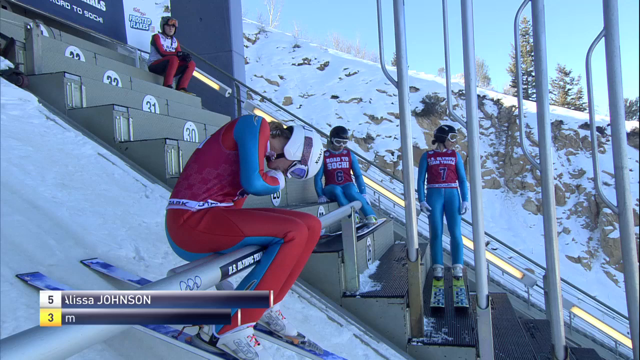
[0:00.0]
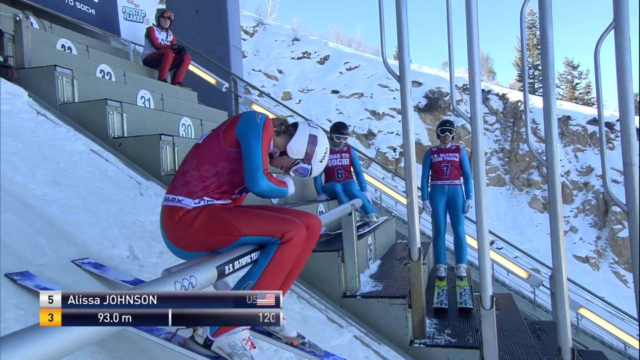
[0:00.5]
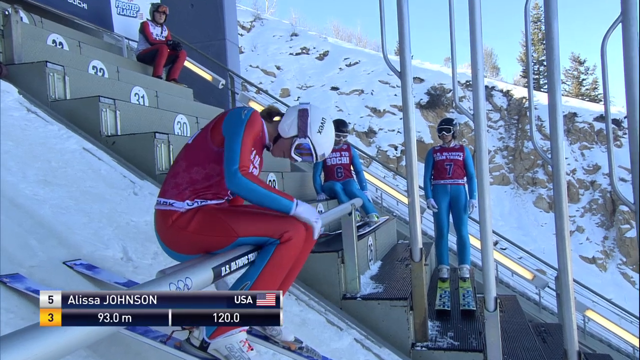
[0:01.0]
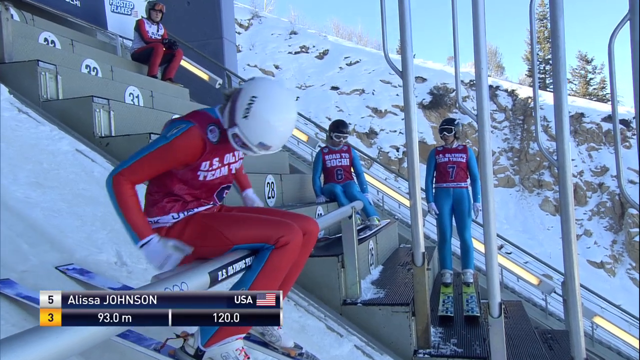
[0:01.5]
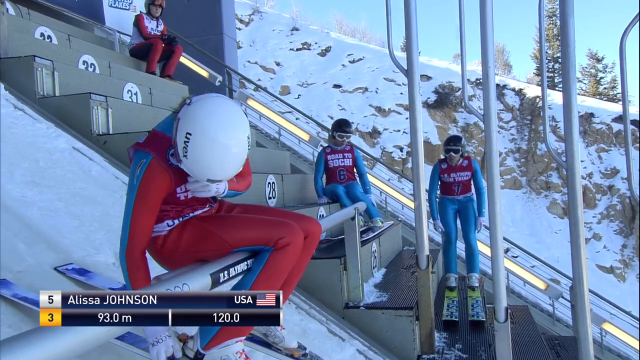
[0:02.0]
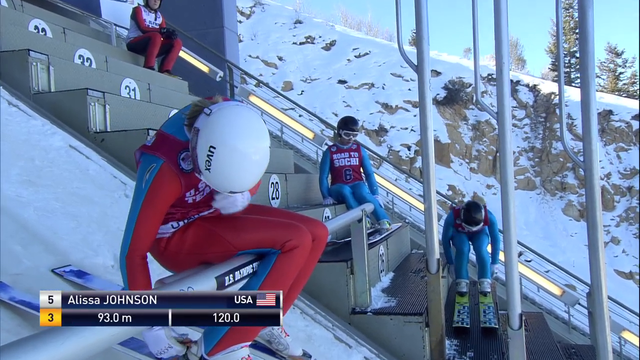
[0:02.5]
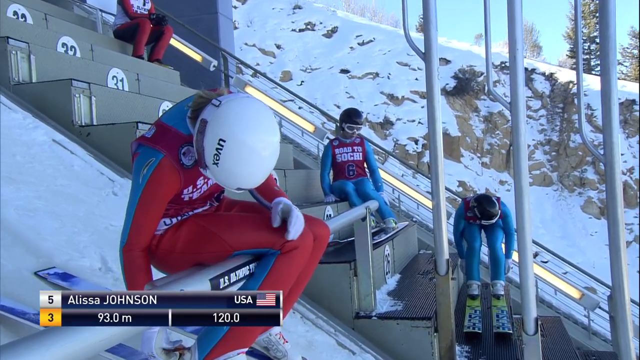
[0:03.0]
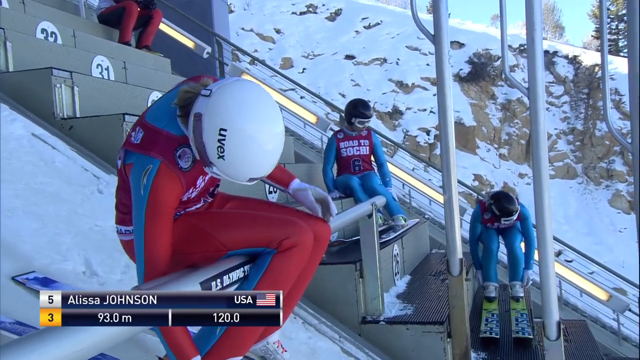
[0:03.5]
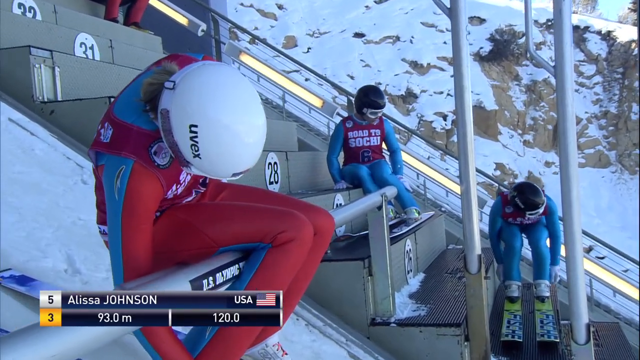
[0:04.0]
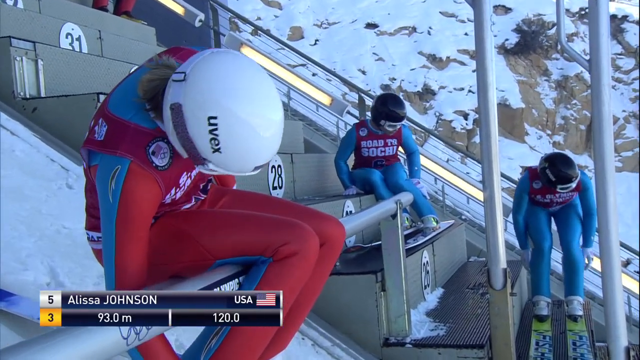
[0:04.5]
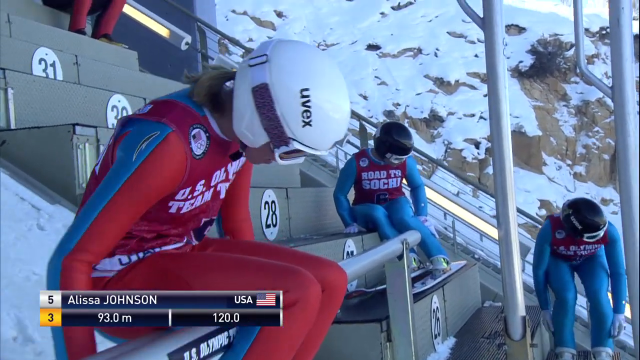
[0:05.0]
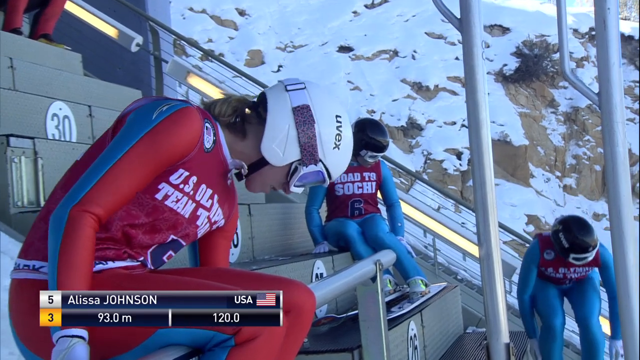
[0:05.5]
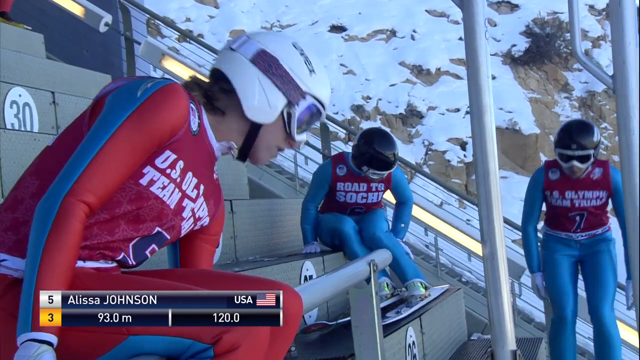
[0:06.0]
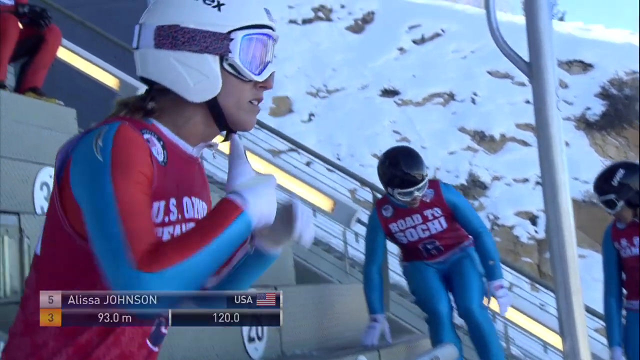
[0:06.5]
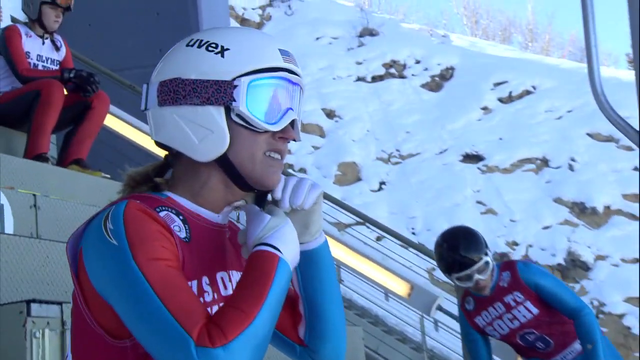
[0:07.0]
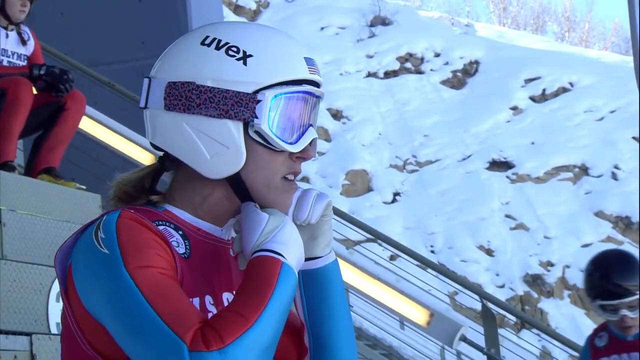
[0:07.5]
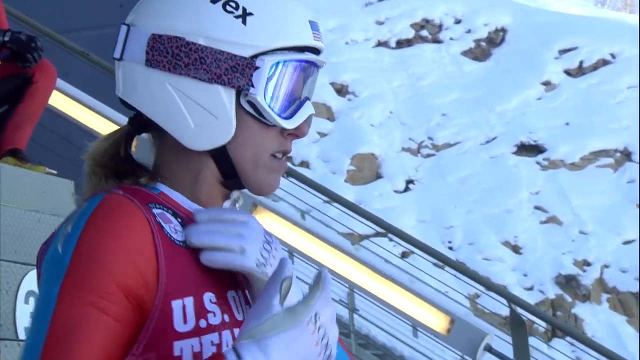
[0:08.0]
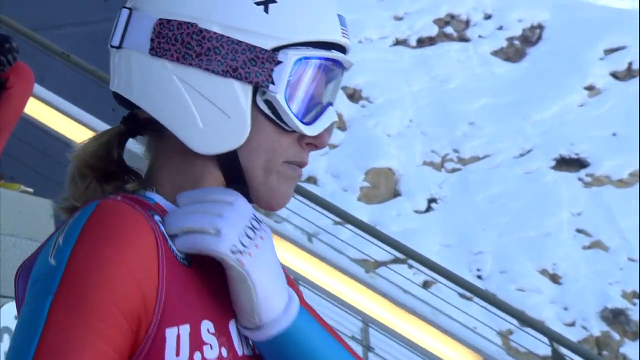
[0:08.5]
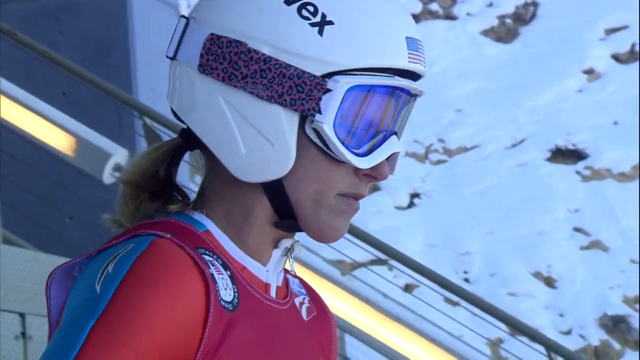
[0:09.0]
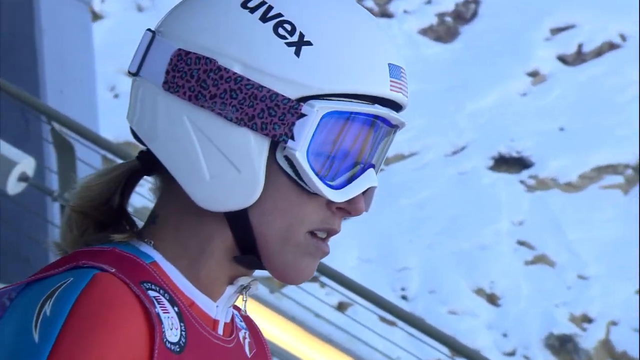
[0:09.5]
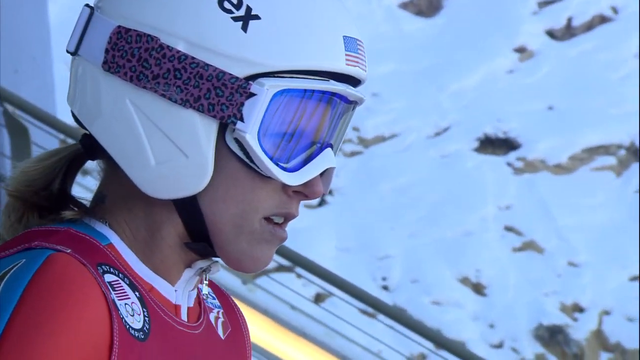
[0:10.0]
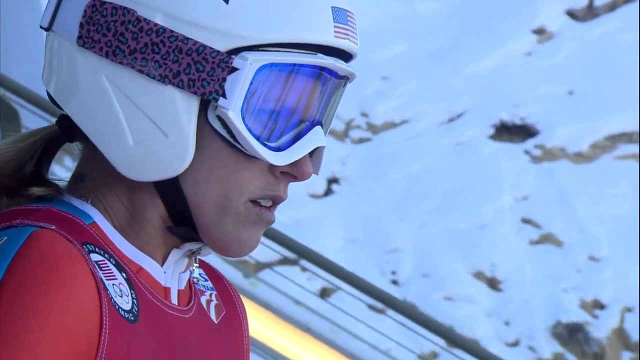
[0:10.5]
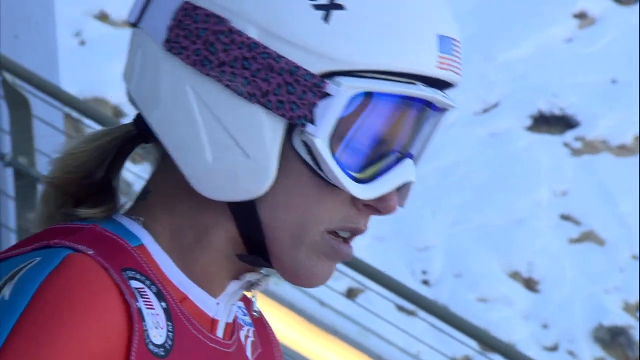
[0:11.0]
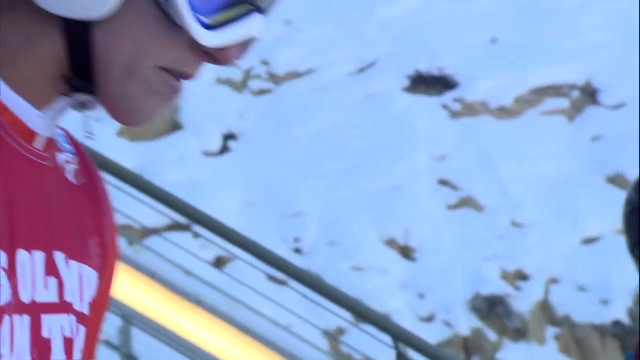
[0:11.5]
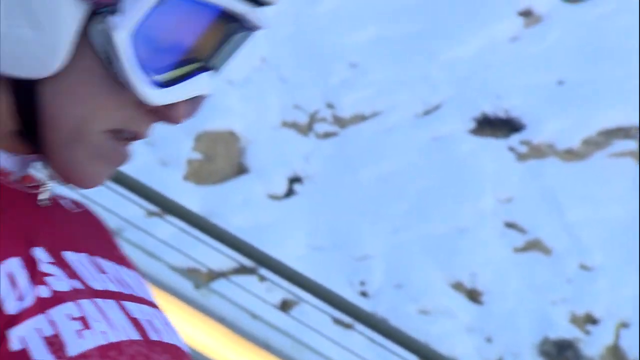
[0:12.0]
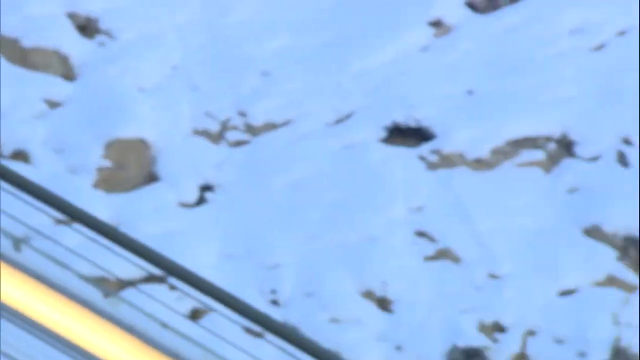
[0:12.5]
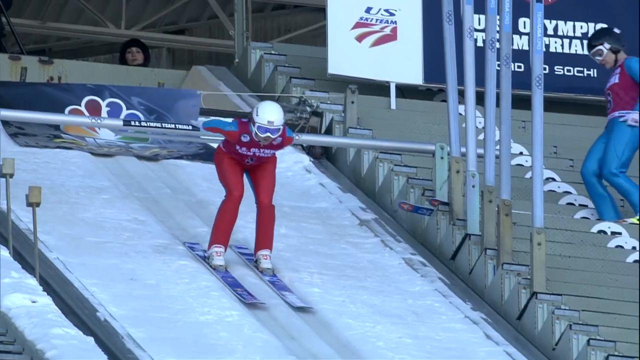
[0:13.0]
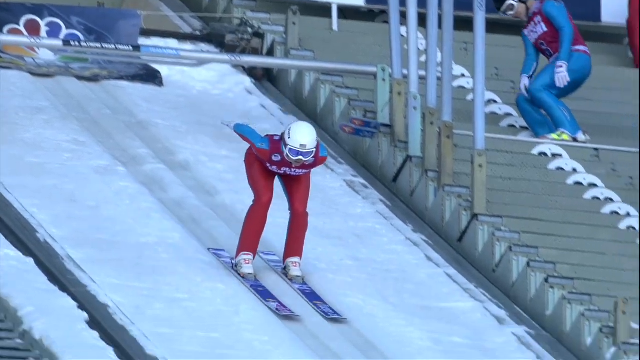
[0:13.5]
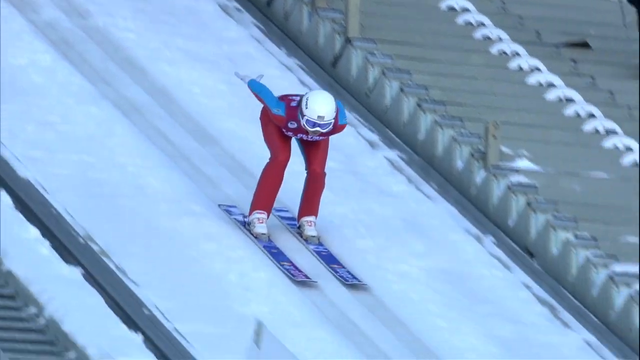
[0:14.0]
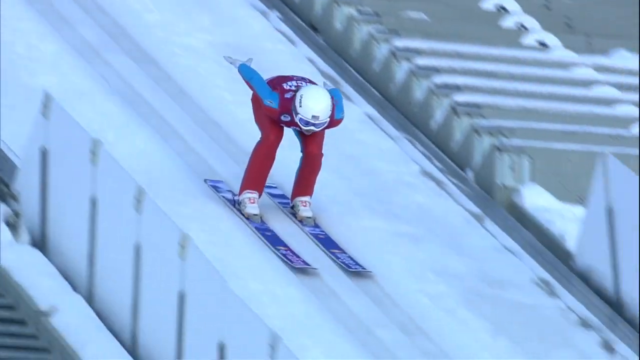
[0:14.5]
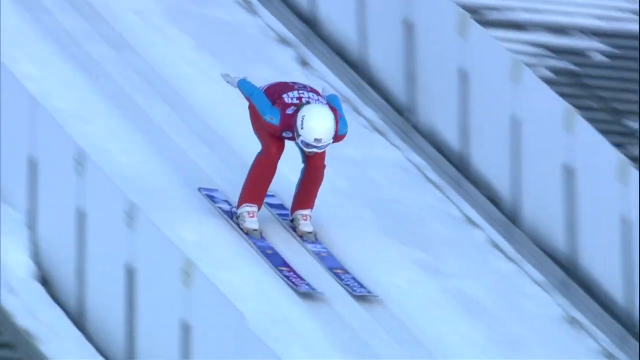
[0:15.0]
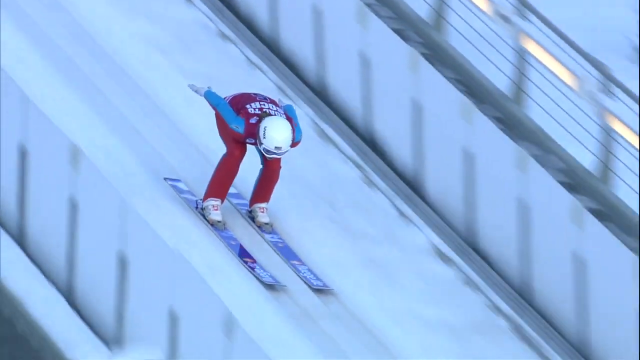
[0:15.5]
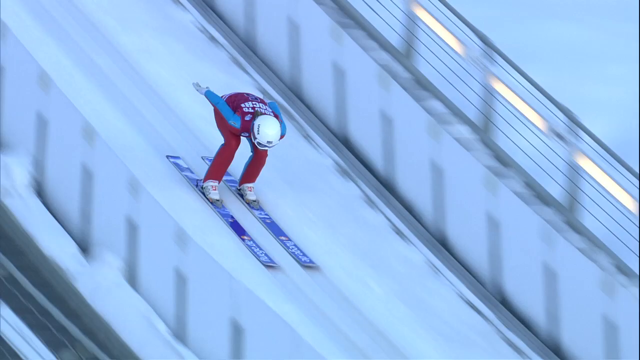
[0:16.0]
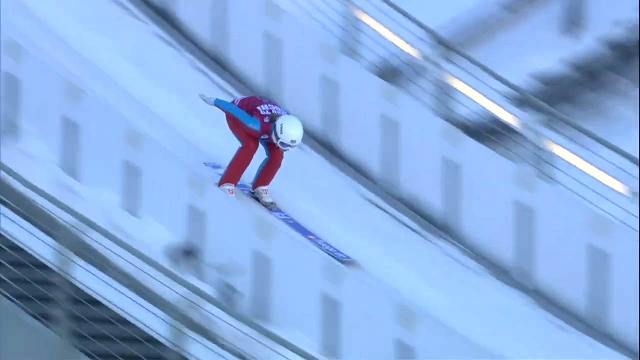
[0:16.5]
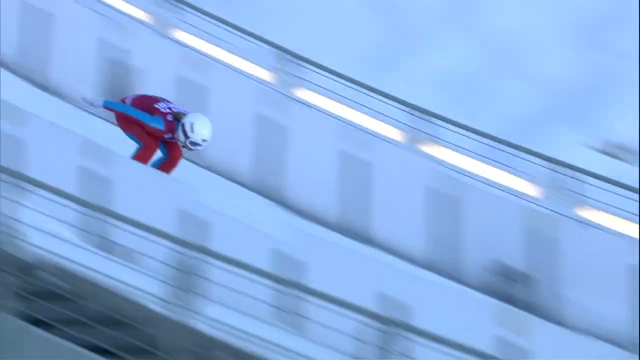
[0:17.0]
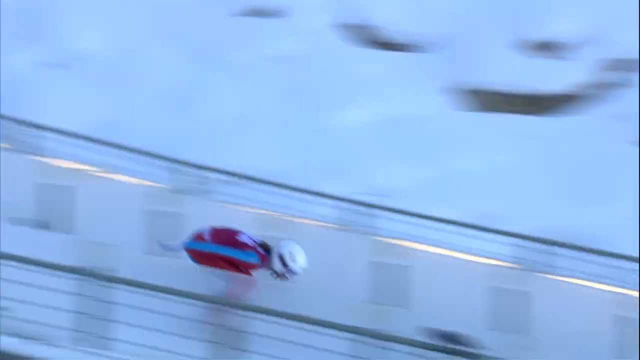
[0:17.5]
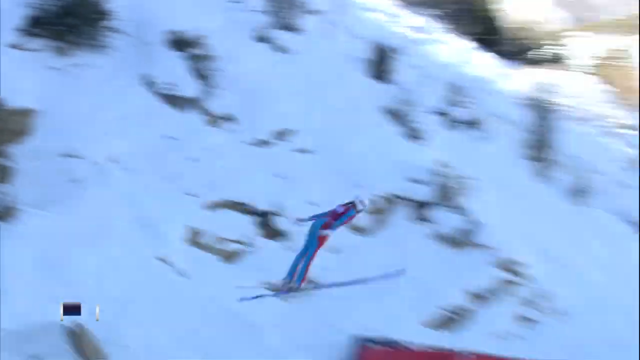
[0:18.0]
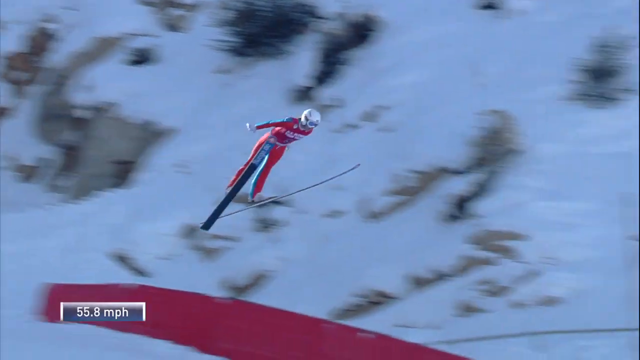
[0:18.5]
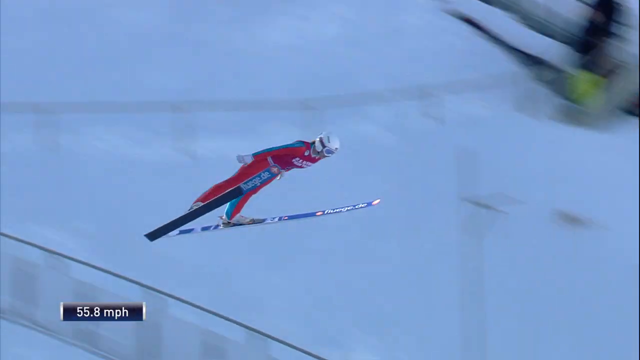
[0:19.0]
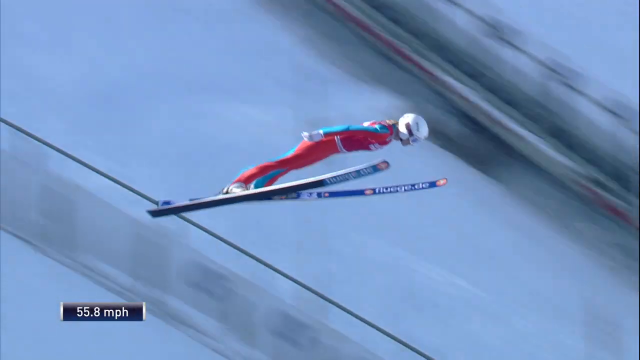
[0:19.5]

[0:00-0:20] A skier wearing a red and blue jersey sits on a metal bench at the top of a ski slope, while other skiers stand on steps at the top of the slope in the background. The skier is Alyssa Johnson from the United States. She looks toward the ground, possibly adjusting her skis, and reaches down toward them with her right hand to fix an issue. She then sits up straight, grabs the buckle of her helmet with both hands, and tightens the strap. She takes a deep breath as the camera zooms in on her face. She stands up from the bench, bending forward and pulling both arms straight back behind her, and starts down the slope at high speed. She leans further toward the ground, her back almost perpendicular to it, picking up speed as the camera tracks her down the slope. The view switches to a side angle as she reaches full speed, hits the ramp, and flies into the air. Her skis rise almost to head level as she soars, and she begins leaning her body forward to gain momentum.